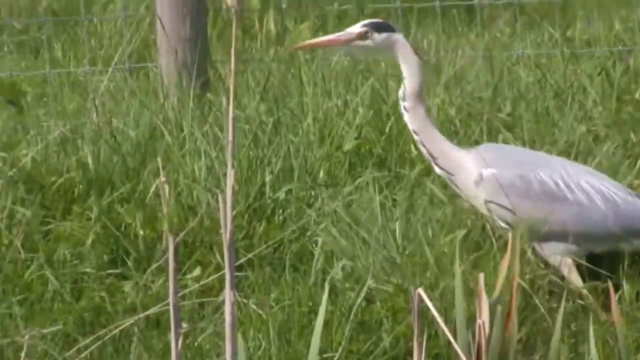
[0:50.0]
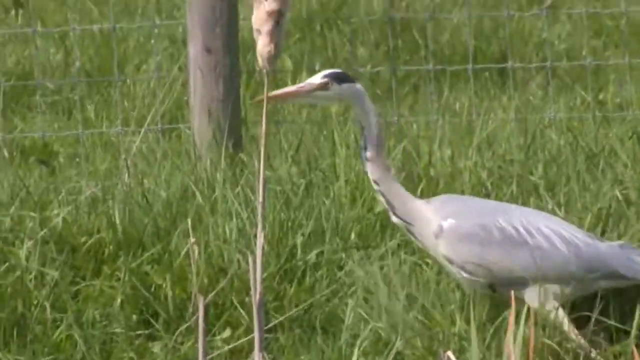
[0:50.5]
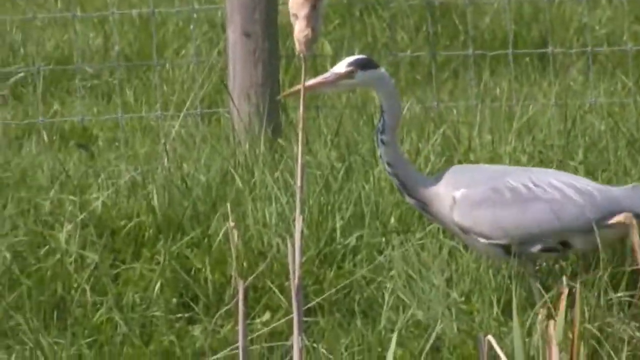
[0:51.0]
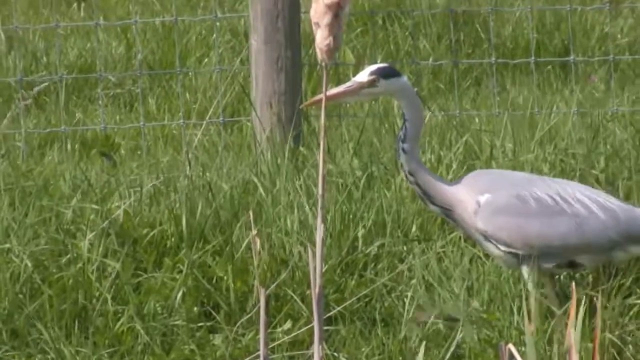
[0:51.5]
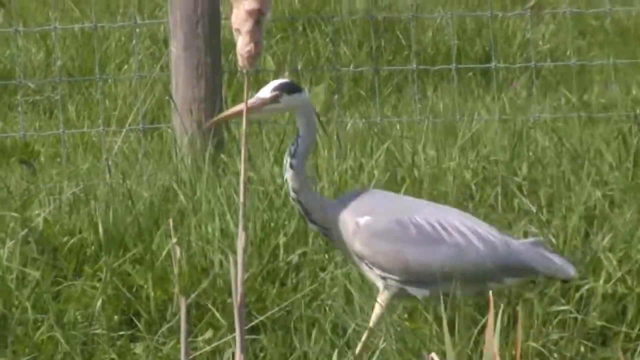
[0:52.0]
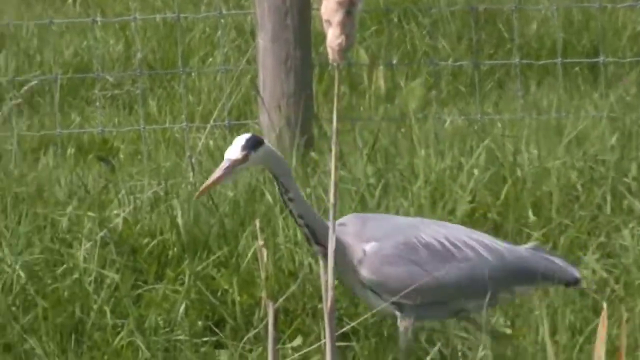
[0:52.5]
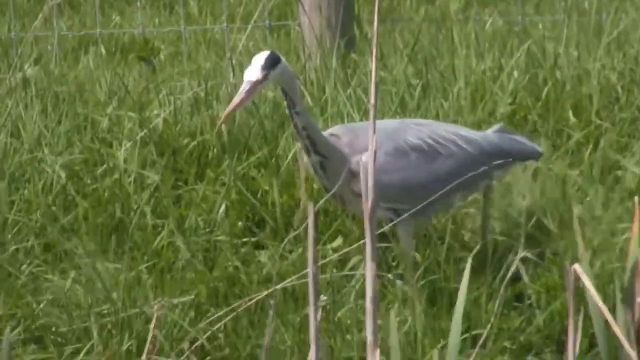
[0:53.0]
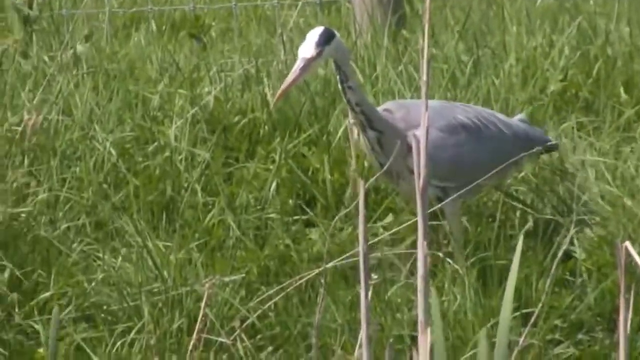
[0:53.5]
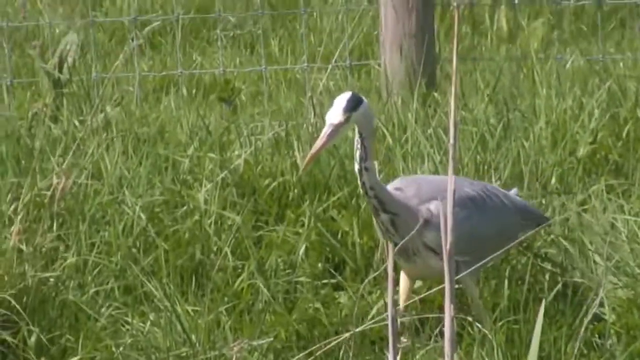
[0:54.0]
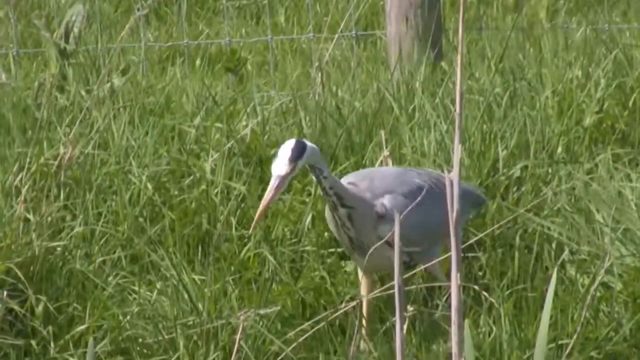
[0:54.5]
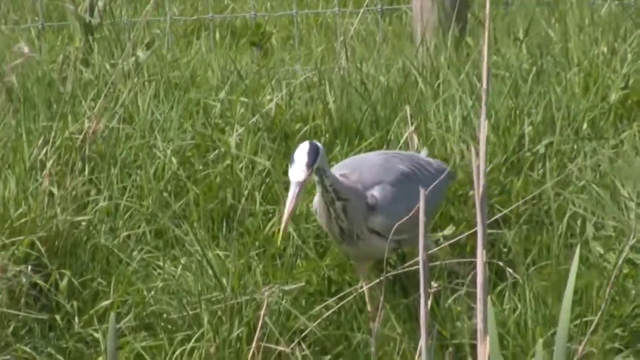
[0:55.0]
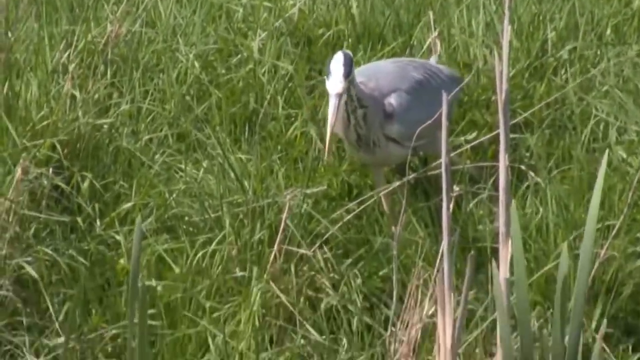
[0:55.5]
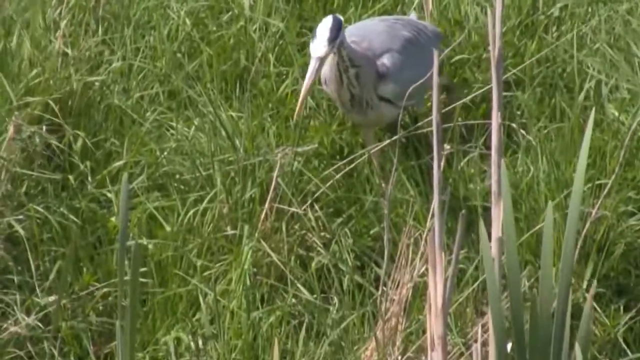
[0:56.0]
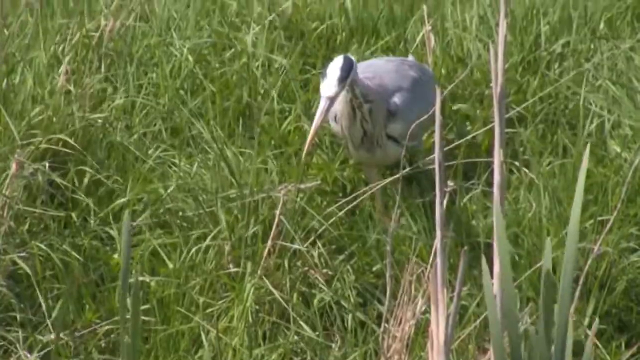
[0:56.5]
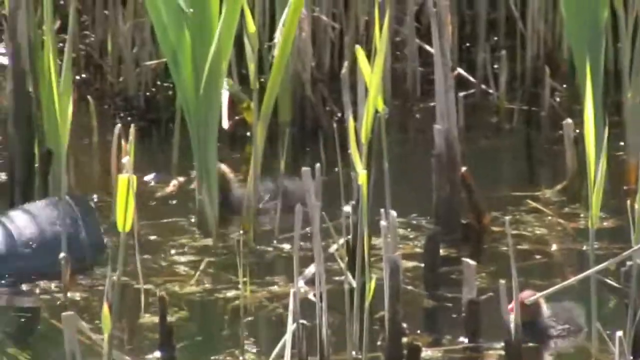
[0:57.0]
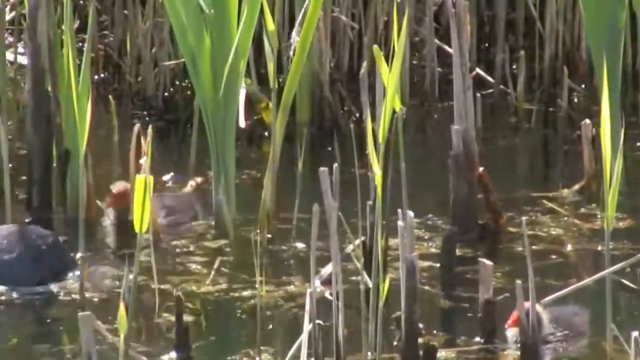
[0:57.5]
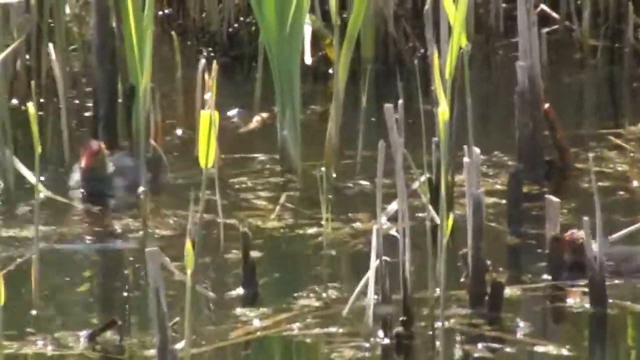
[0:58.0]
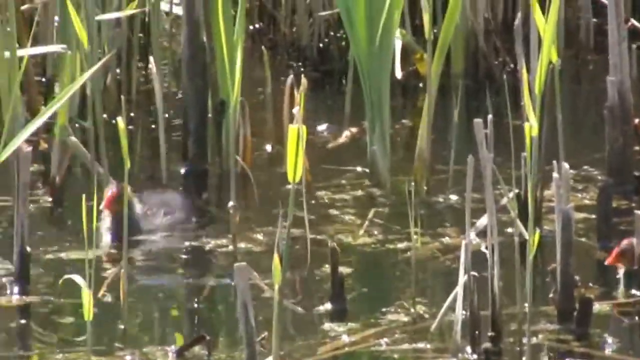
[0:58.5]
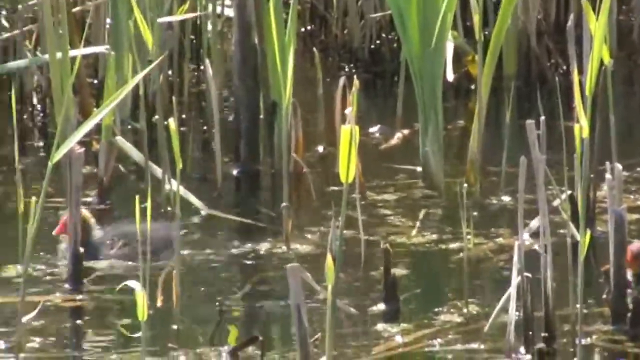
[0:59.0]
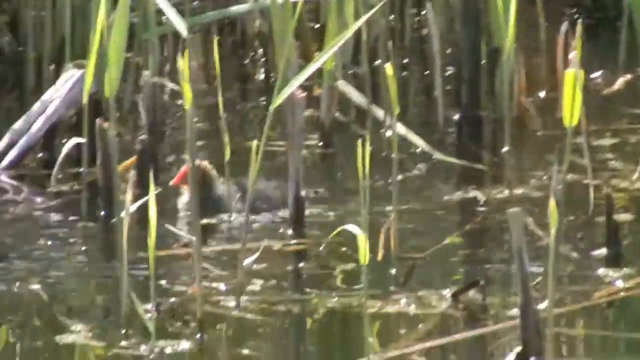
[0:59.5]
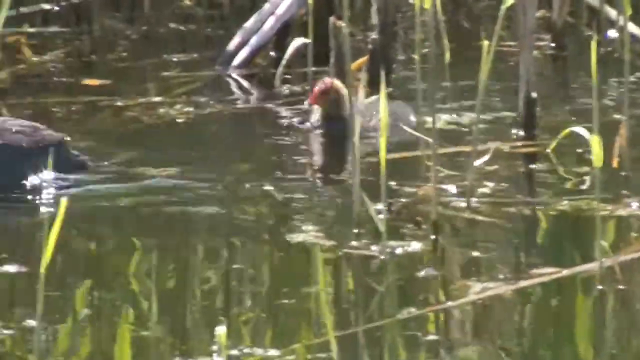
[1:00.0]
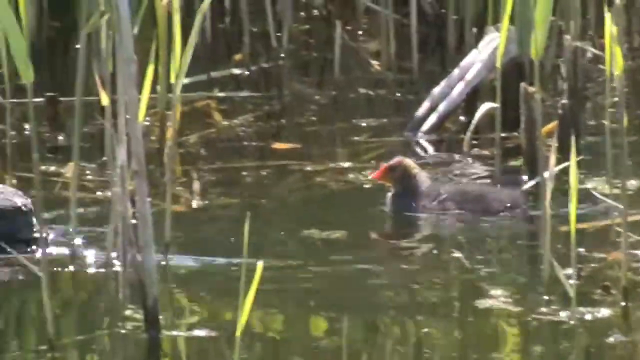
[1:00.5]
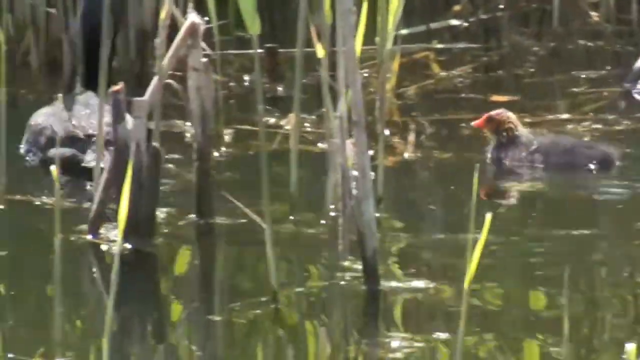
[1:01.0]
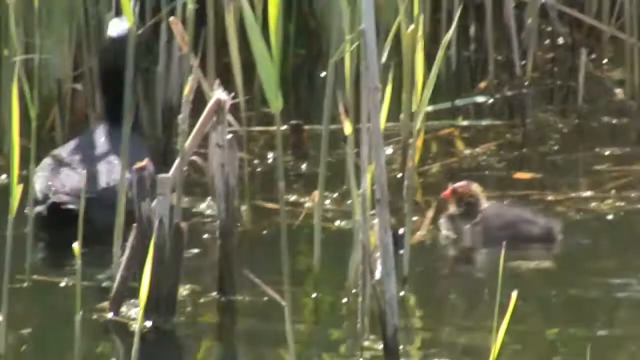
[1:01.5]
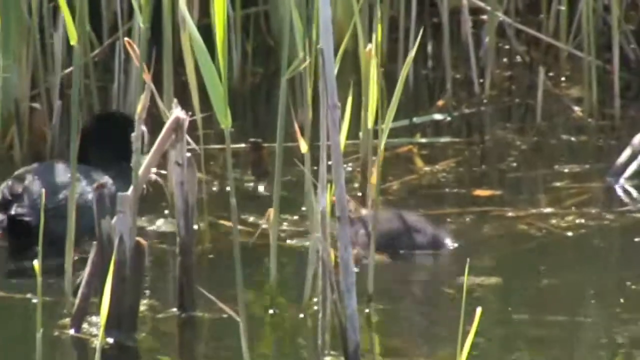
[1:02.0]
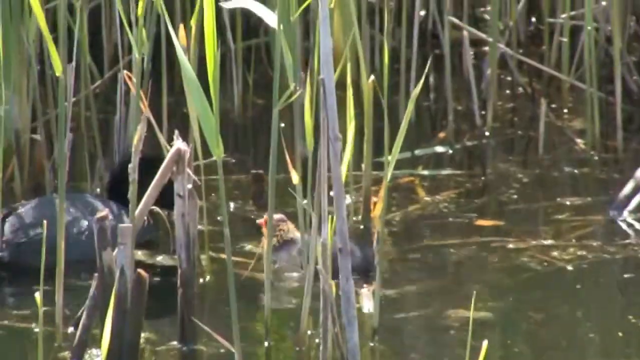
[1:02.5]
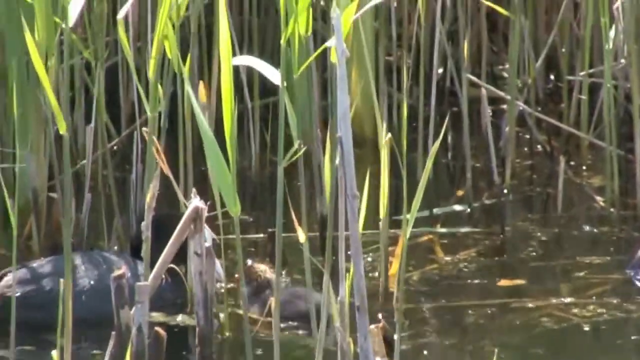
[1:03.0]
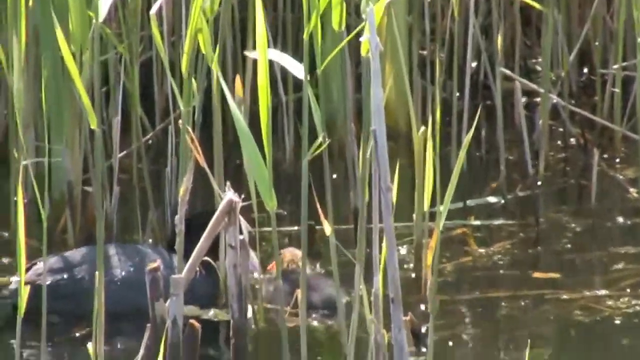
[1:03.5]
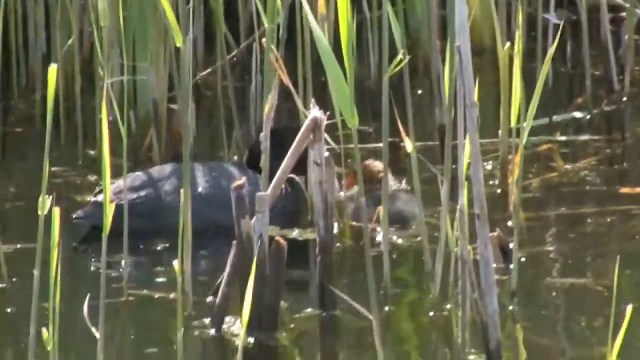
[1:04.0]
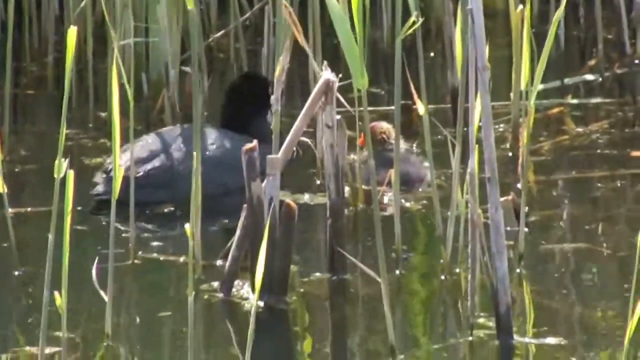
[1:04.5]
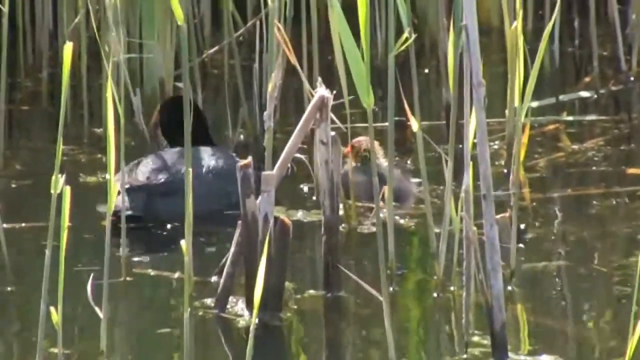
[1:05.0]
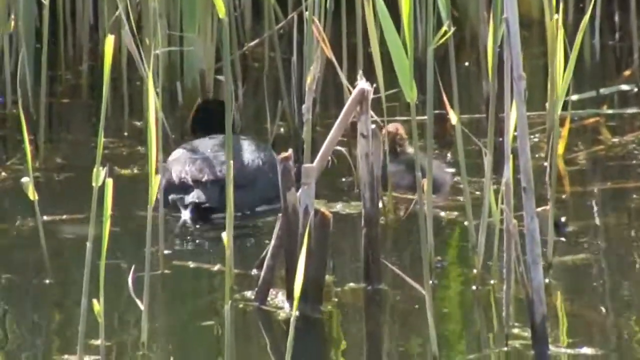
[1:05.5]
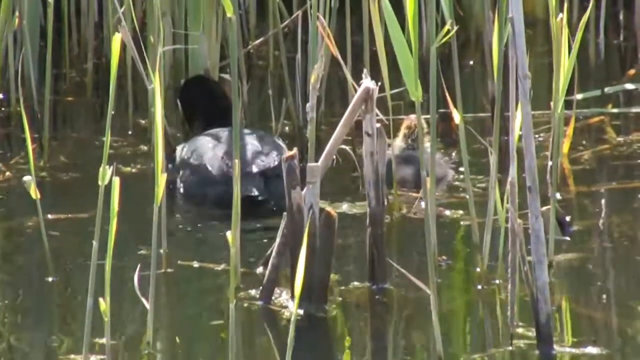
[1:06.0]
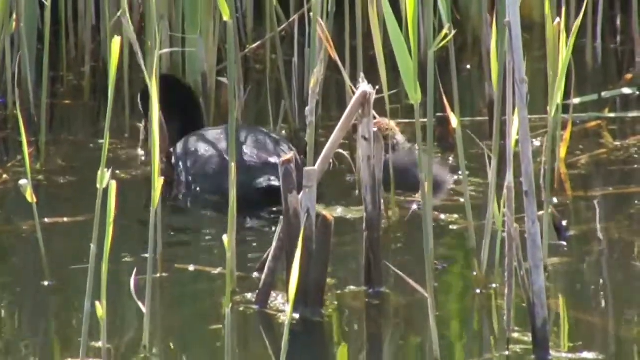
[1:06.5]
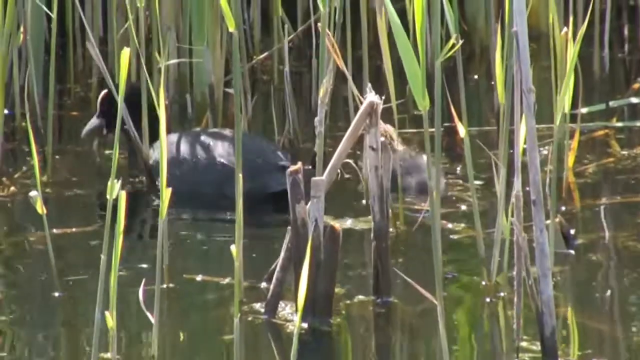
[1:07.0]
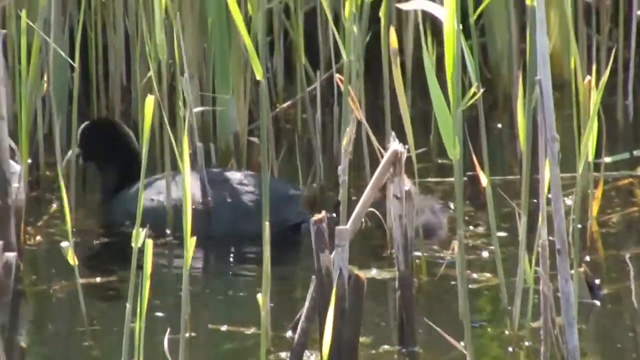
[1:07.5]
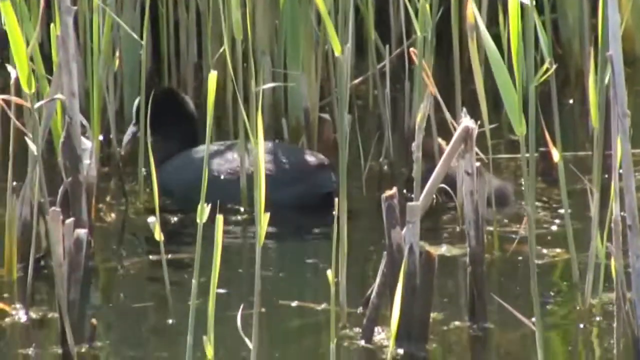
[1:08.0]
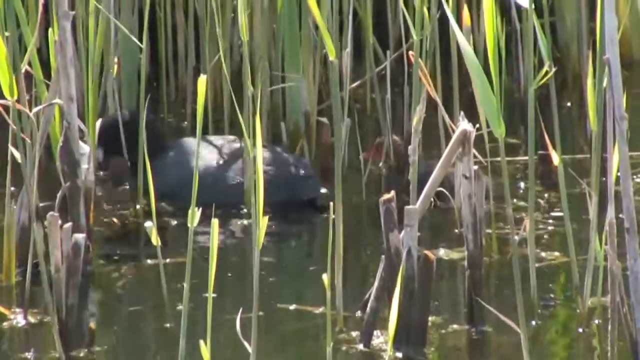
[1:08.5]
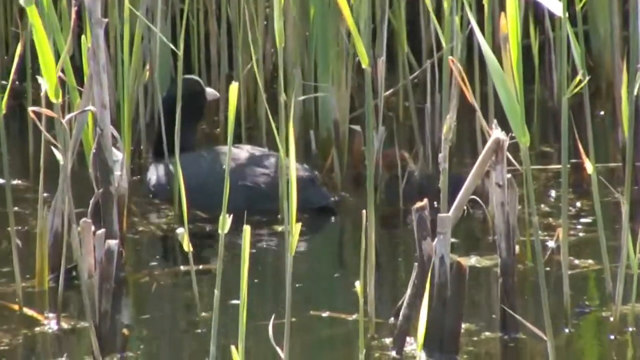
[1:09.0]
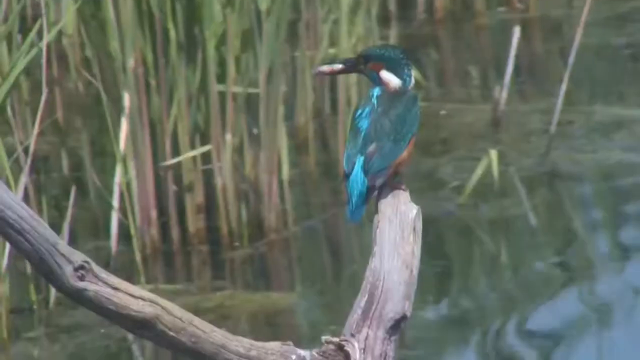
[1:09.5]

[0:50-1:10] A crane moves slowly through some tall grass. It is grey with a whitish head, and it starts looking at the ground, apparently searching for something. The video then switches to a duckling in the water, swimming amongst some reeds and following its mother. The duckling is small and grey with a red beak; the mother also has grey feathers, with black feathers on her head and a whitish-yellowish beak. The mother stops and starts dipping her head in the water, possibly searching for something to eat. The duckling stops alongside her and looks around as she continues to search for food. The mother appears to have something in her mouth, or is trying to find something. The video then switches again to a blue kingfisher on a piece of wood above the water.